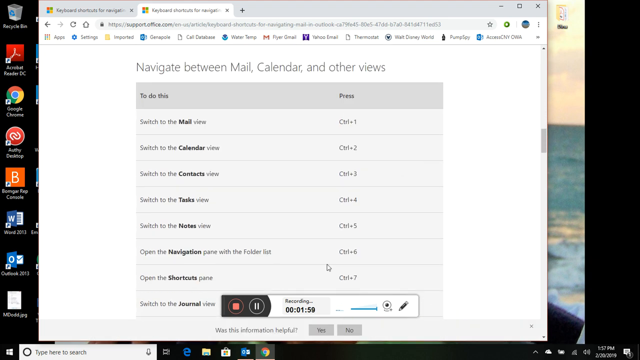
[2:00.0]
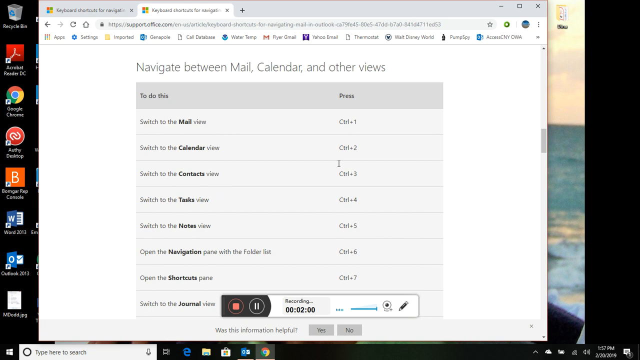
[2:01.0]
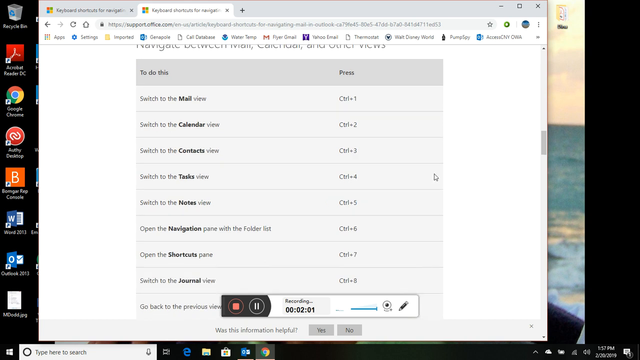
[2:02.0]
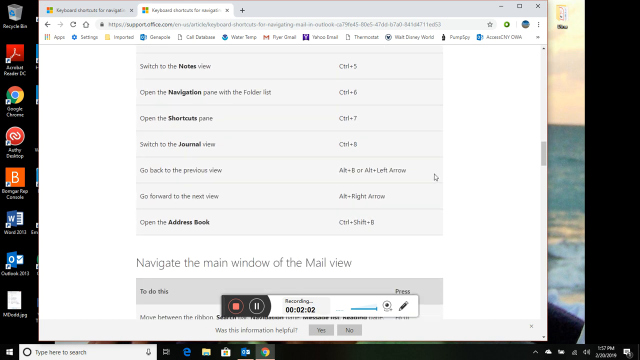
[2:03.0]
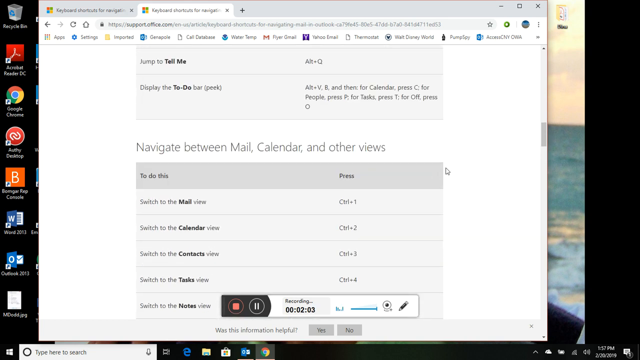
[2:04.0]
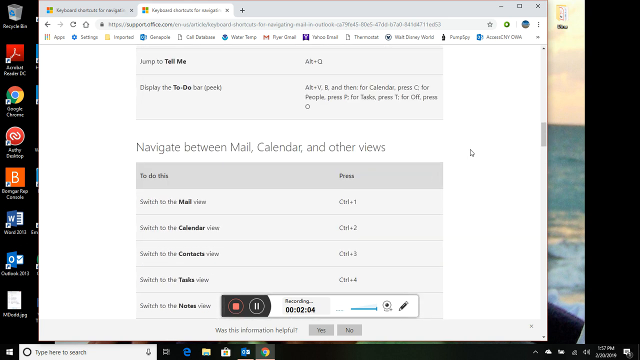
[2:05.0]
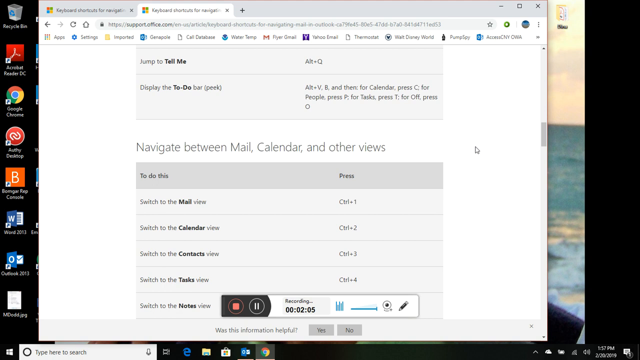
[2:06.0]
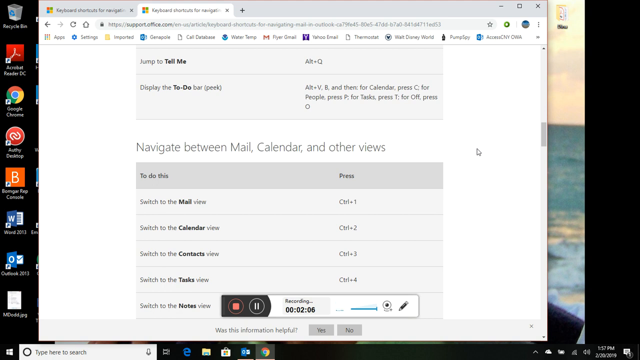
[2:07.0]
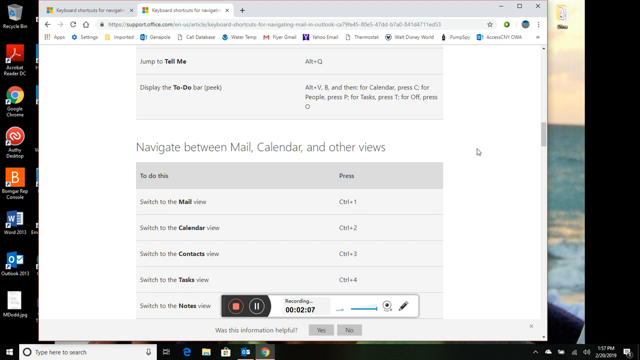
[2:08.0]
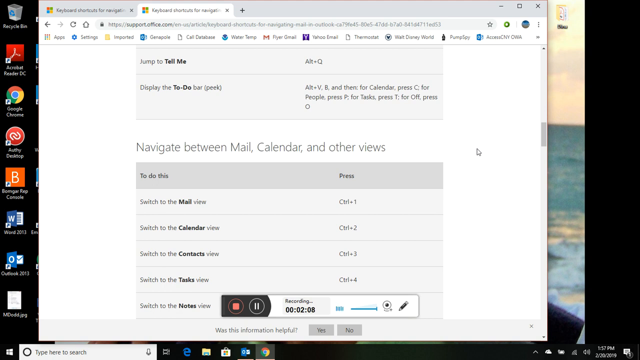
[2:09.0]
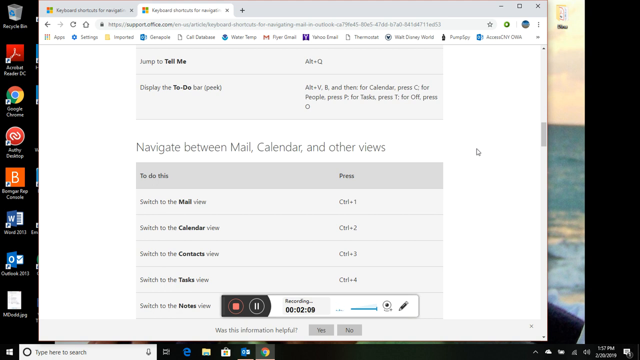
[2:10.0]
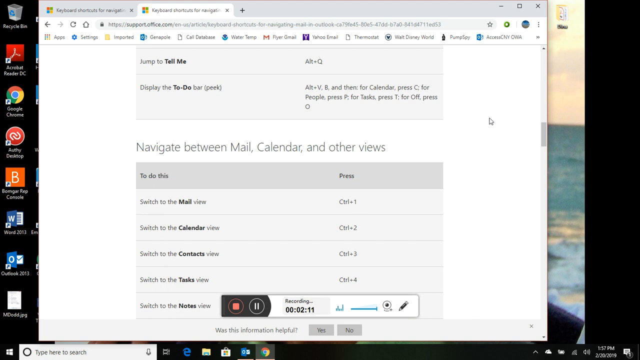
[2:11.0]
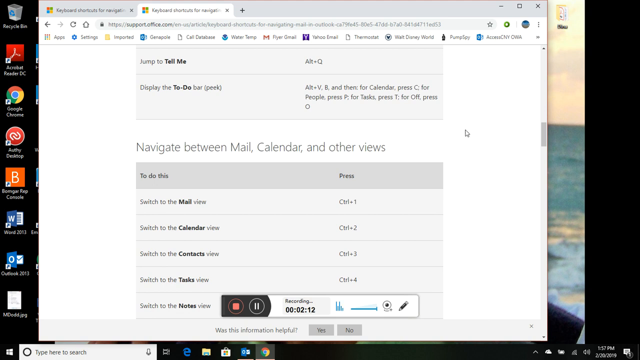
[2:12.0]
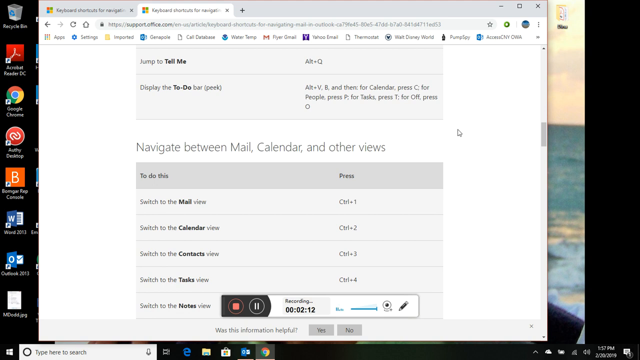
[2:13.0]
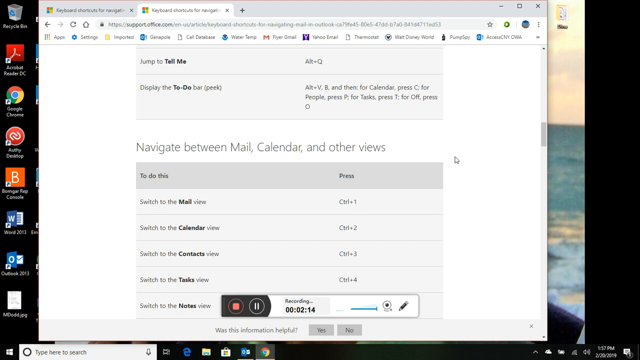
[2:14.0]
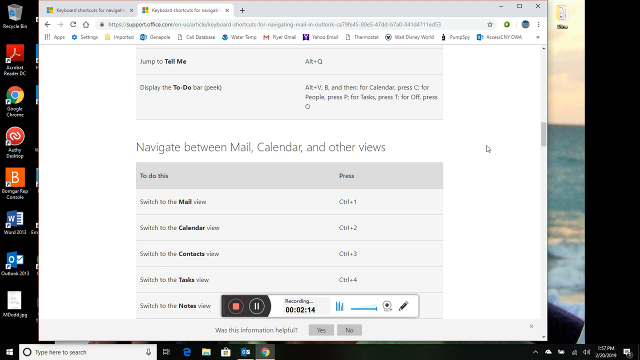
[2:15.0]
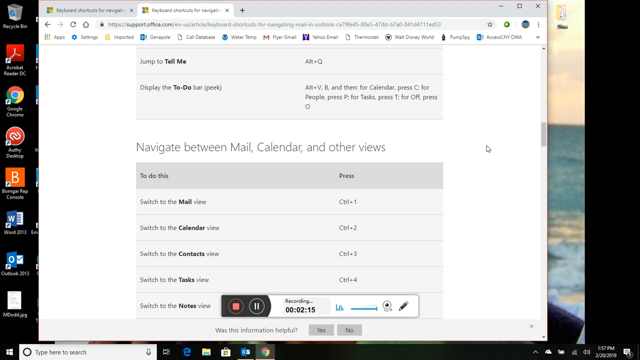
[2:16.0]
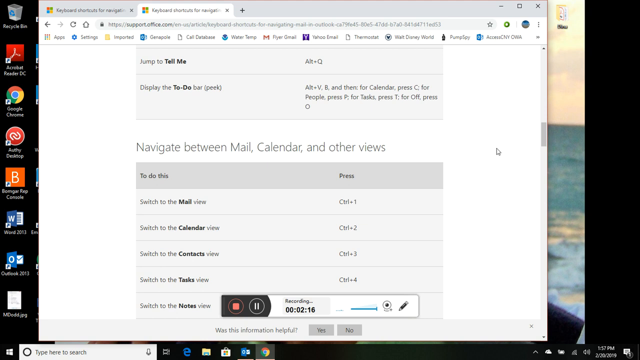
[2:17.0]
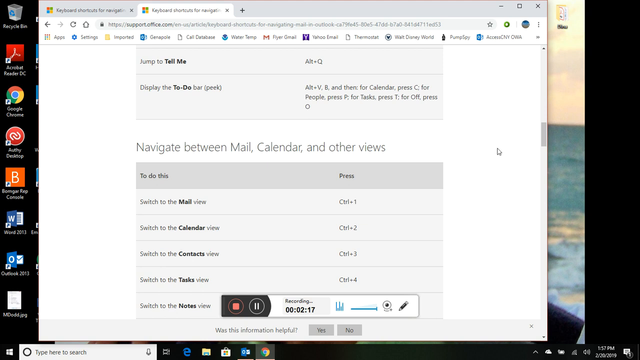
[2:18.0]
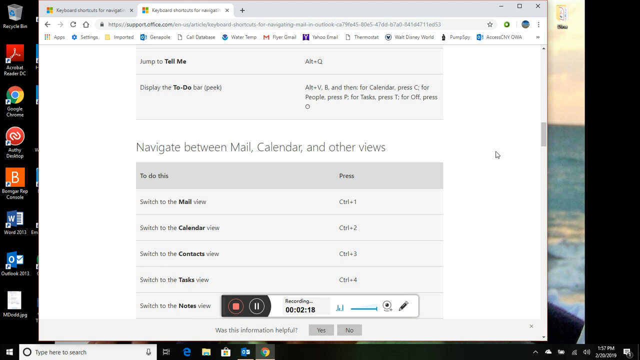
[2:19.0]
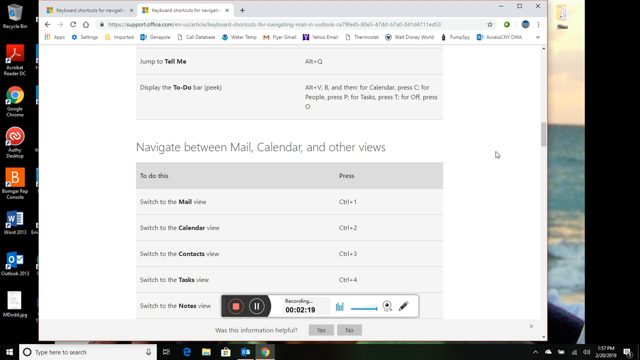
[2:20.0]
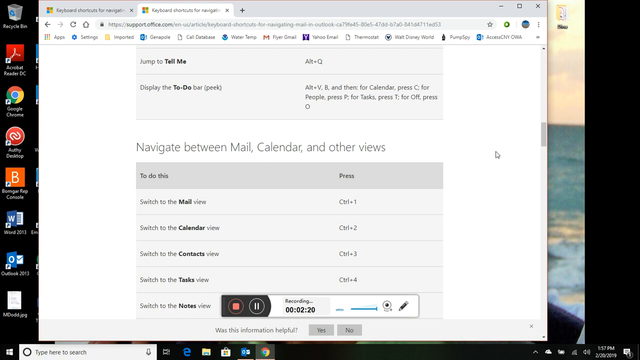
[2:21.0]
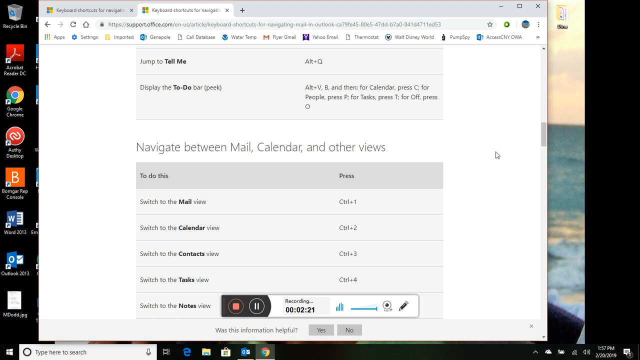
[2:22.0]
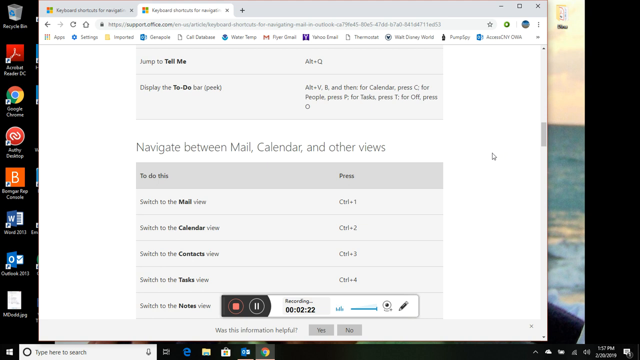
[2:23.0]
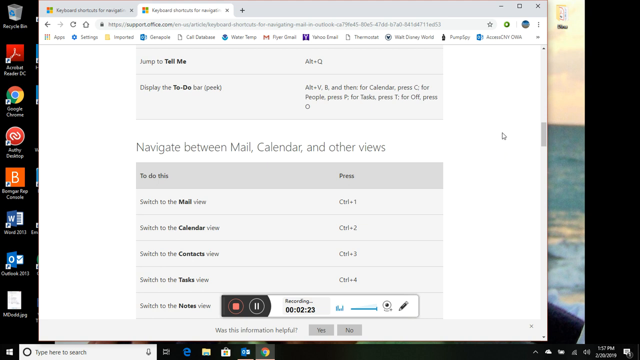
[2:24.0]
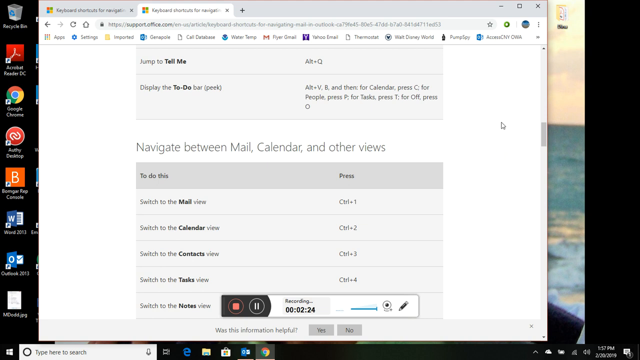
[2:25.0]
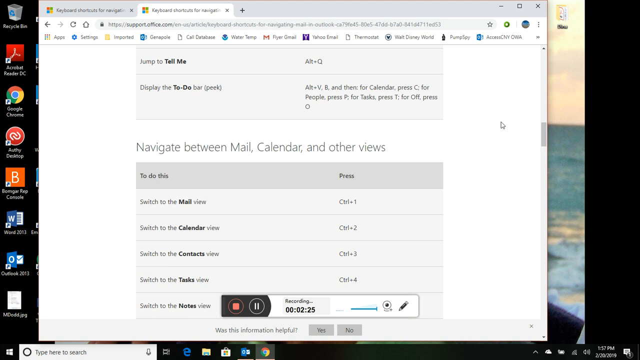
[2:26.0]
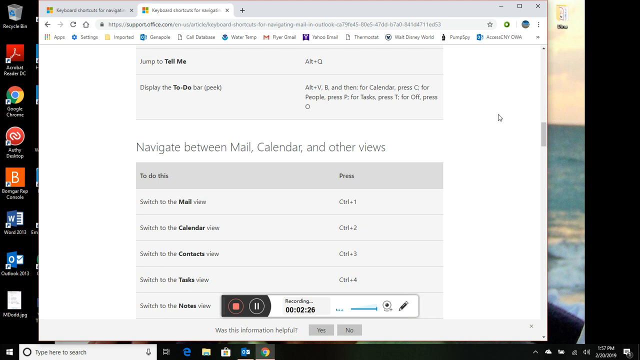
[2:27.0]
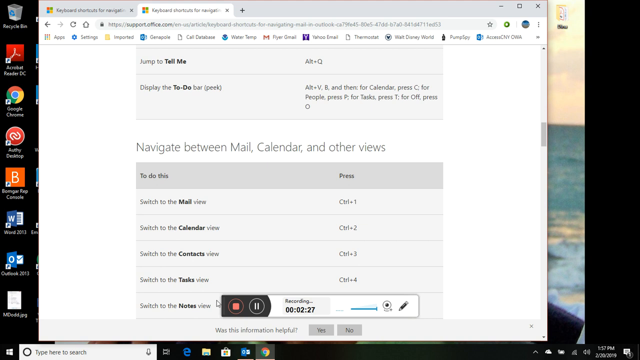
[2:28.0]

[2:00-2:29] The video is about using keyboard shortcuts to navigate Outlook mail. The wallpaper with the old man is visible.